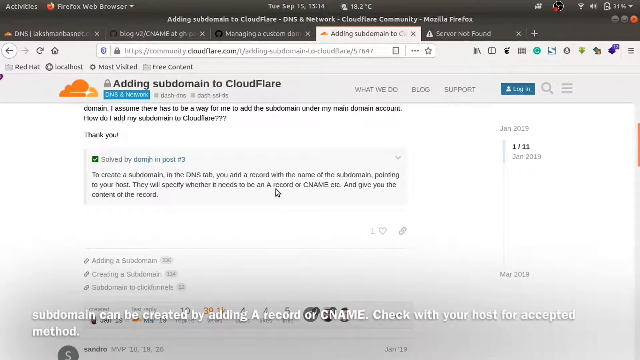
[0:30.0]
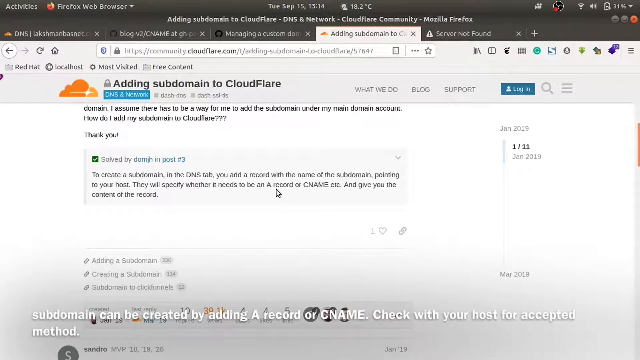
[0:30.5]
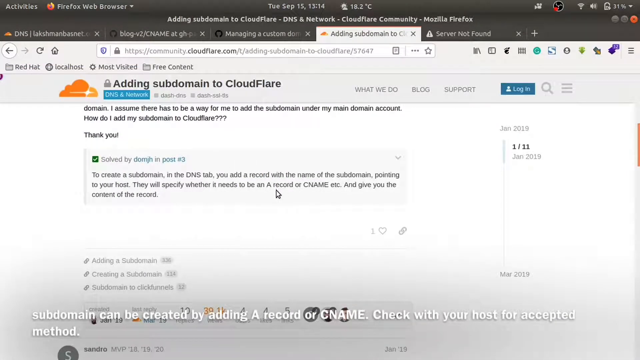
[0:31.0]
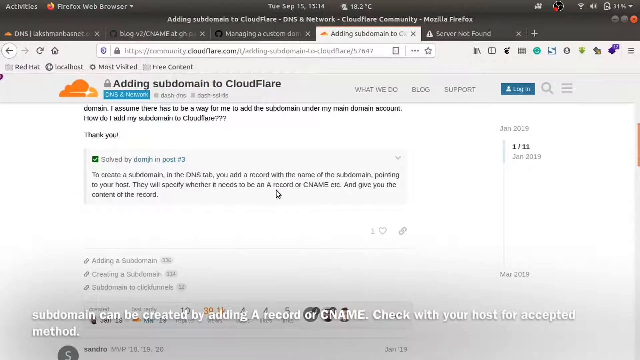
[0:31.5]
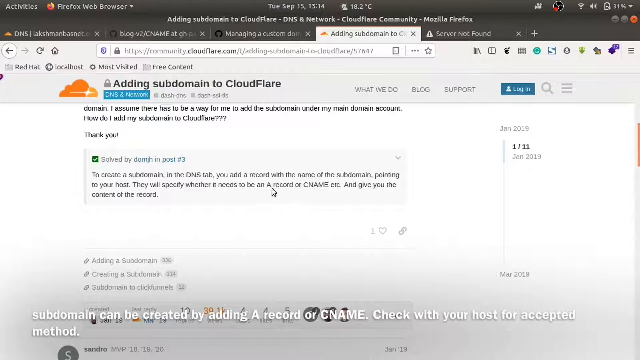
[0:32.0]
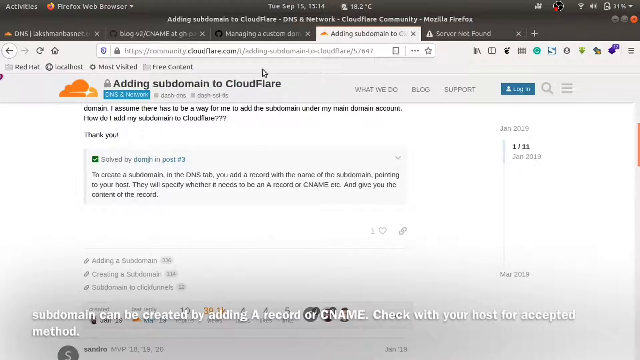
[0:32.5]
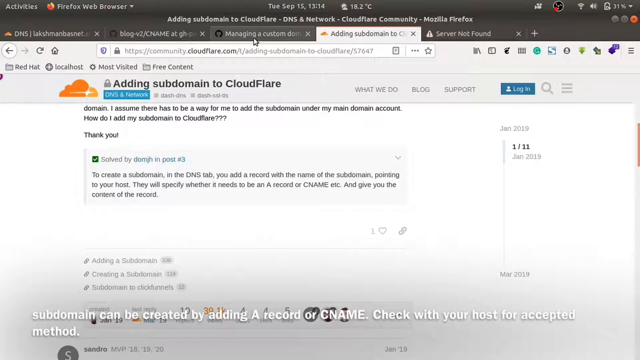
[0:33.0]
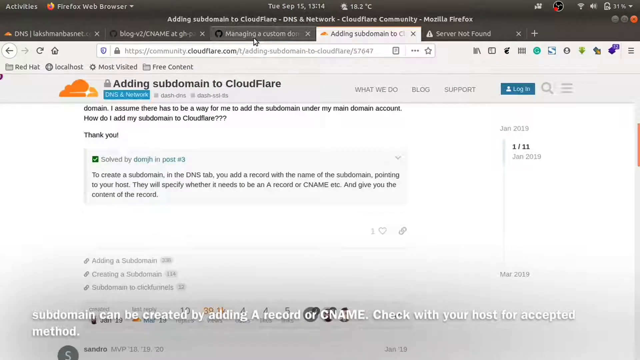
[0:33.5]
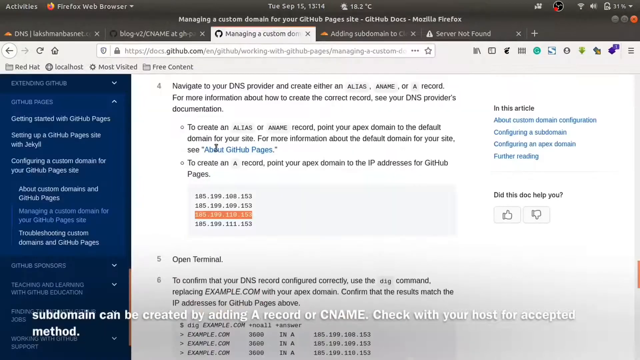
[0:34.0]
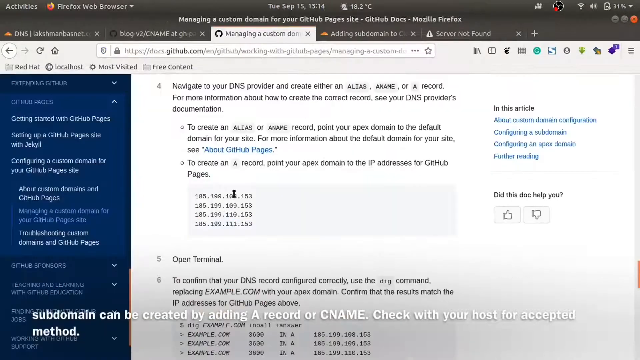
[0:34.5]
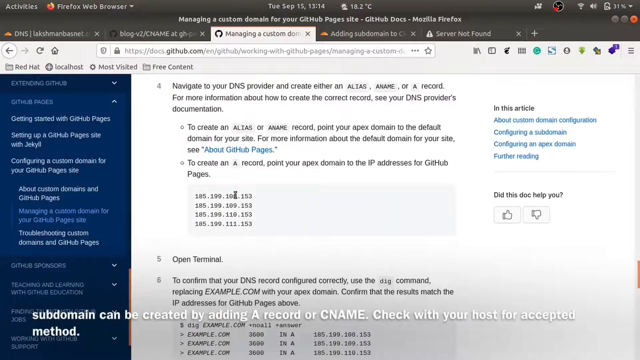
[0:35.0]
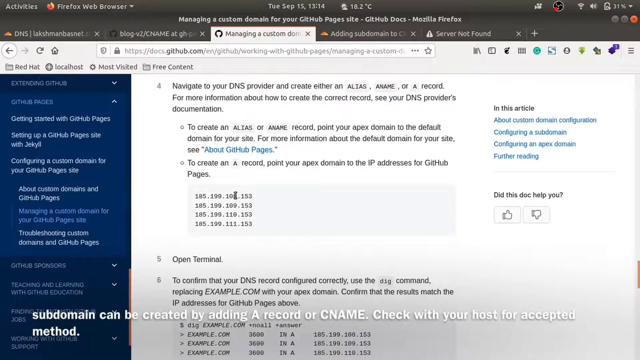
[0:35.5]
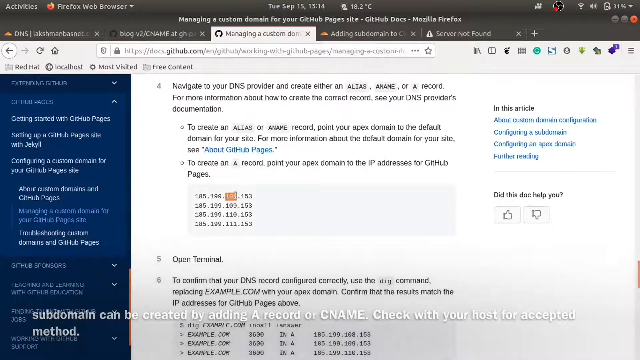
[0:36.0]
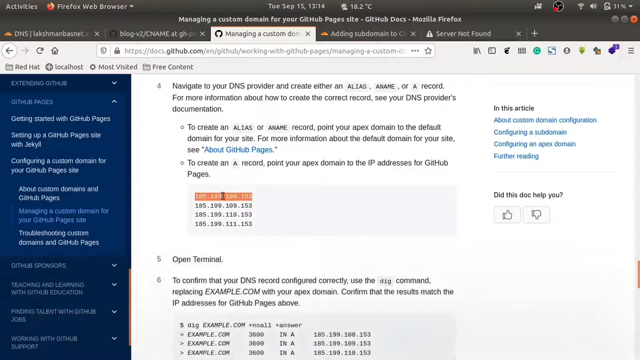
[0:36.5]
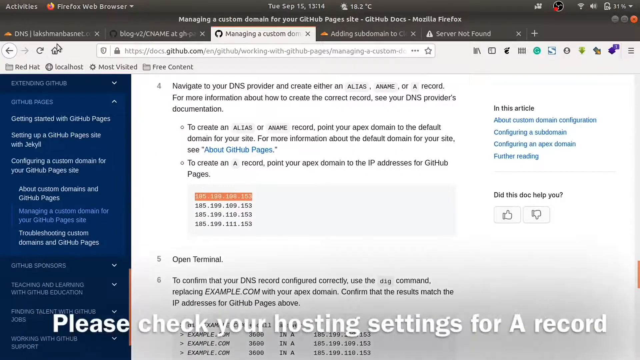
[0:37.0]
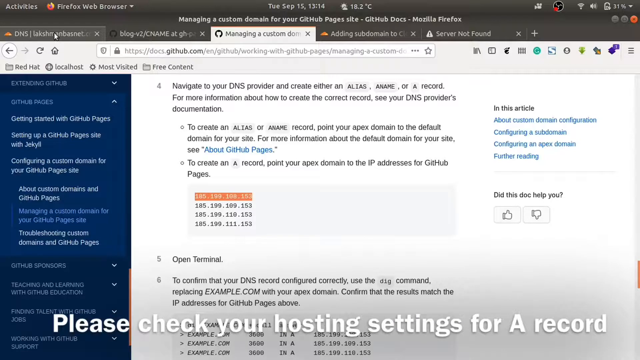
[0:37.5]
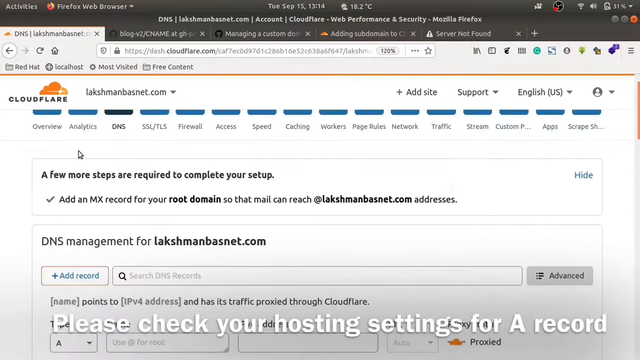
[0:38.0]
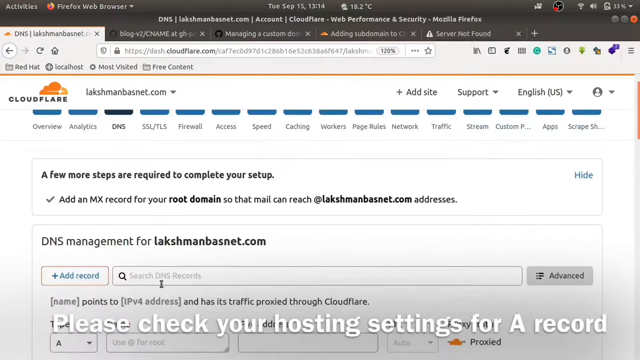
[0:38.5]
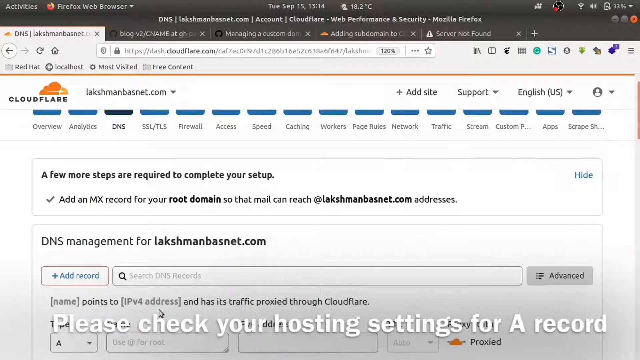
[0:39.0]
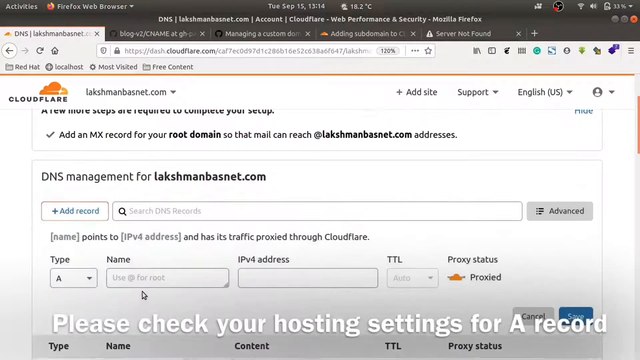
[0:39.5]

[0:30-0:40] He is in the Cloudflare community, on a post asking for help with this problem, with a solution by Dom G Hi in post 3. It says "to create a subdomain in the dns tab you add a record with the name of subdomain pointing to your host". He then goes back to GitHub and copies the IP address for GitHub Pages, then goes to DNS management and tries to enter the name.